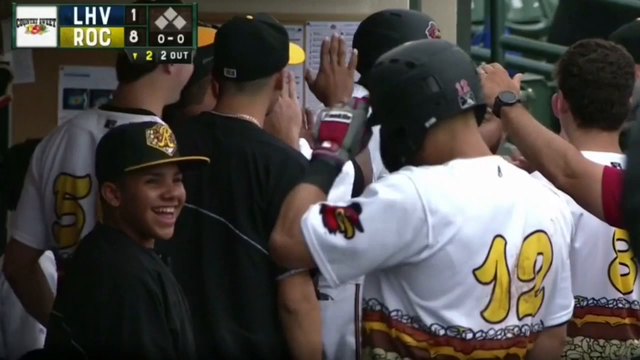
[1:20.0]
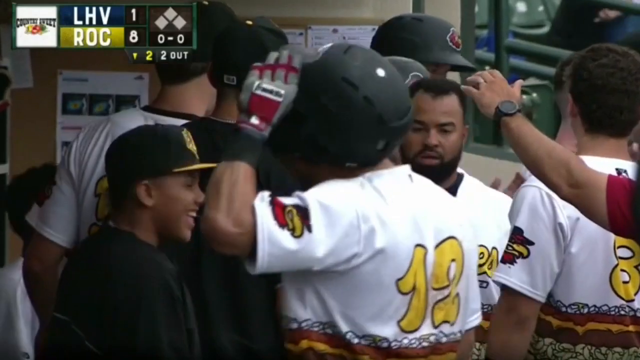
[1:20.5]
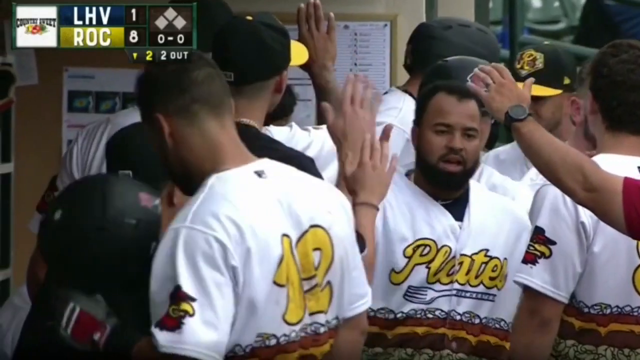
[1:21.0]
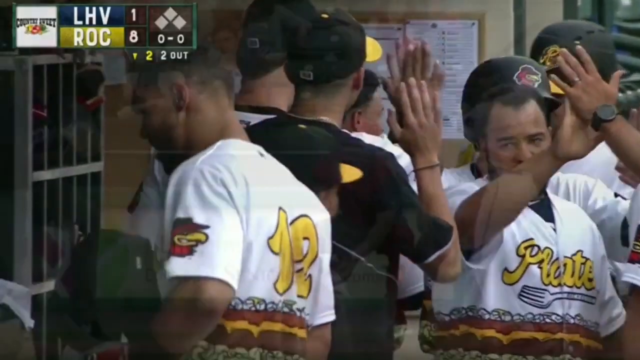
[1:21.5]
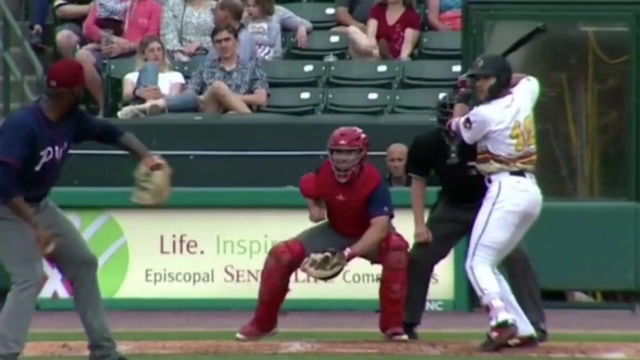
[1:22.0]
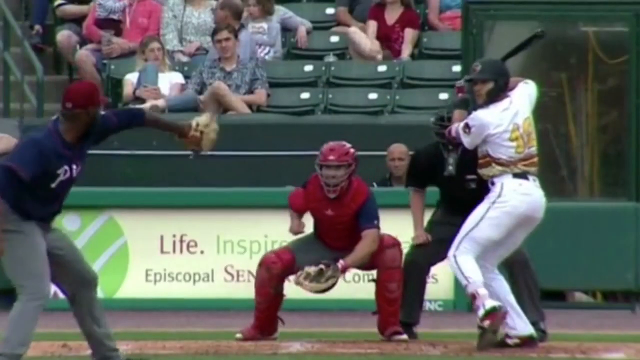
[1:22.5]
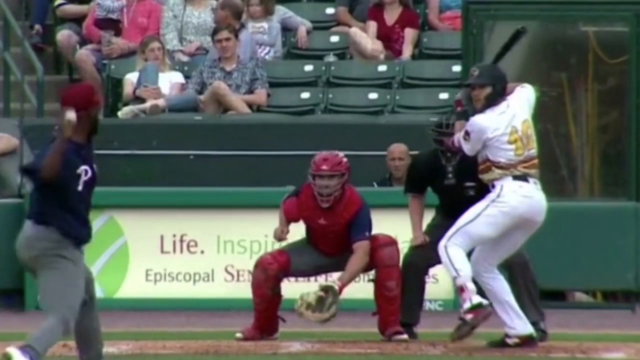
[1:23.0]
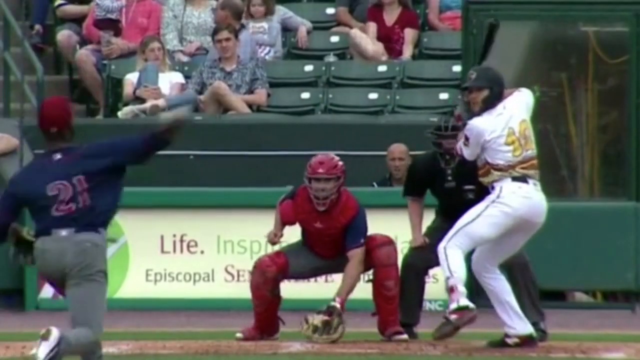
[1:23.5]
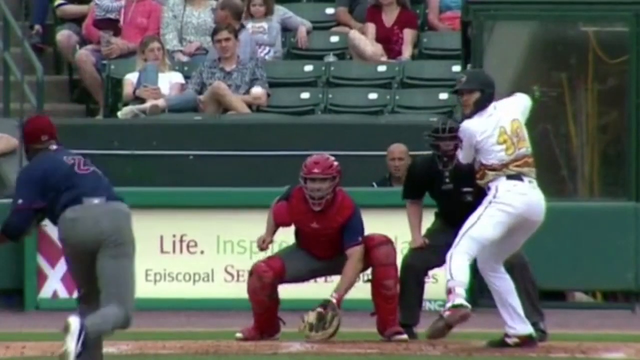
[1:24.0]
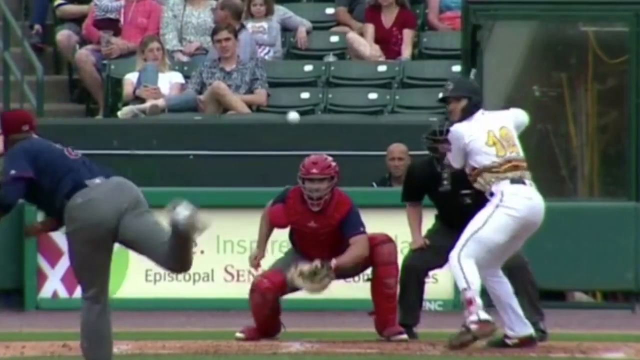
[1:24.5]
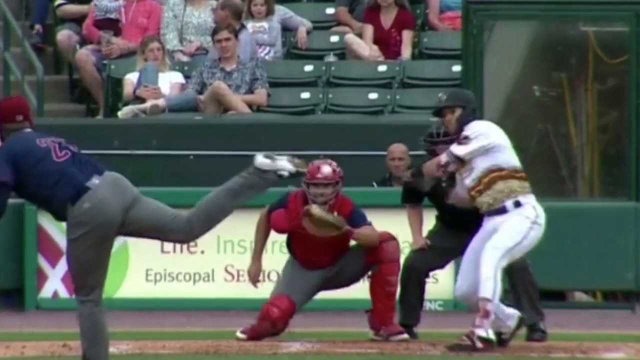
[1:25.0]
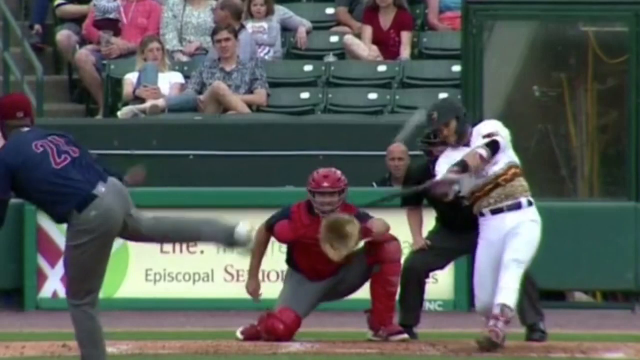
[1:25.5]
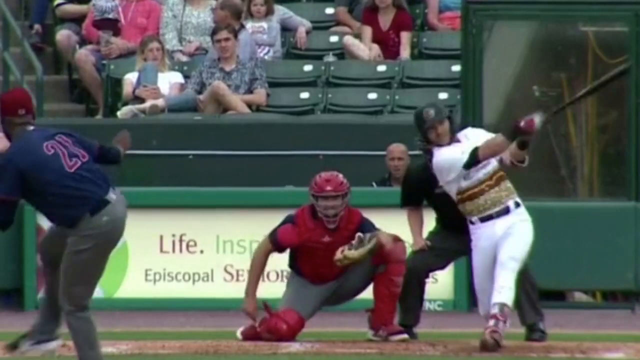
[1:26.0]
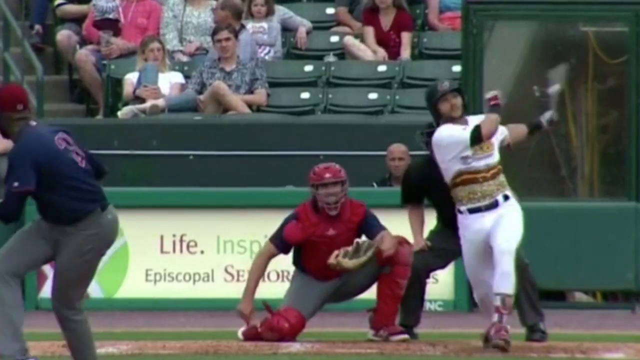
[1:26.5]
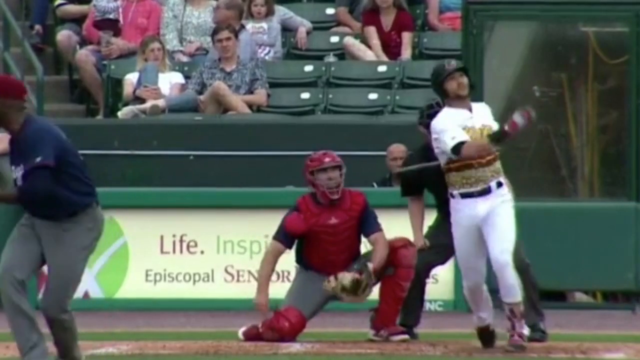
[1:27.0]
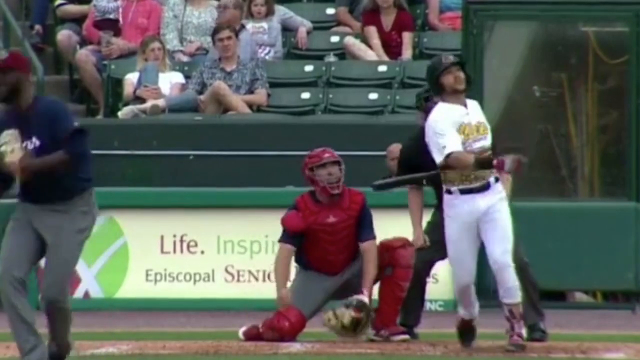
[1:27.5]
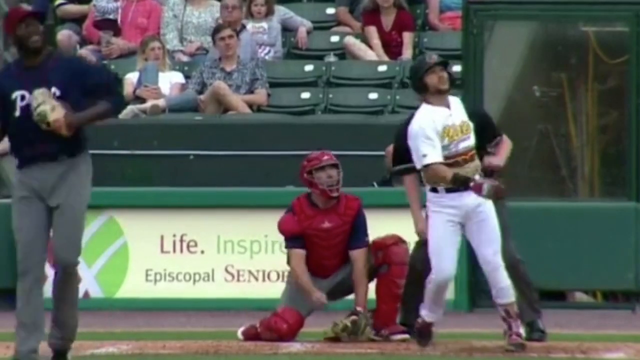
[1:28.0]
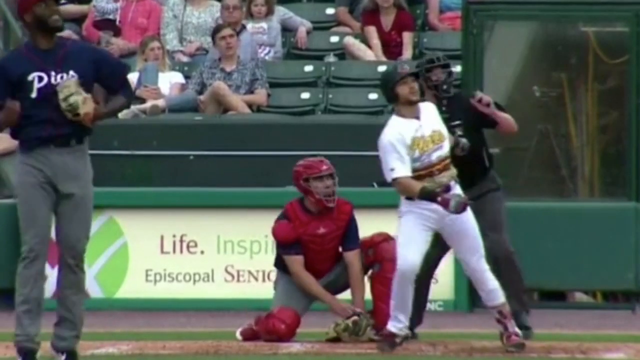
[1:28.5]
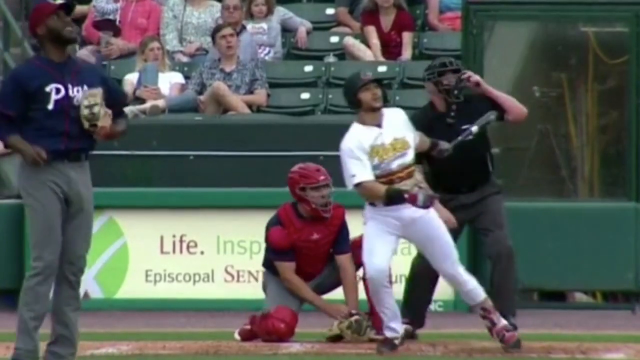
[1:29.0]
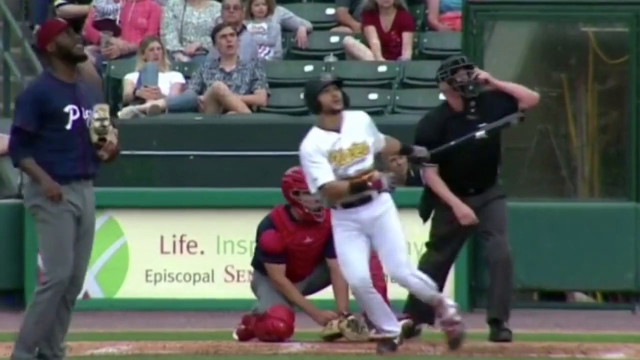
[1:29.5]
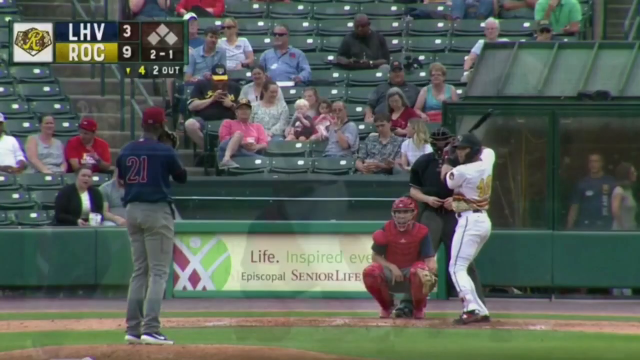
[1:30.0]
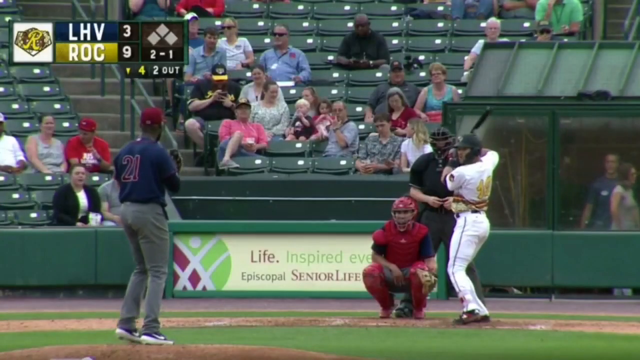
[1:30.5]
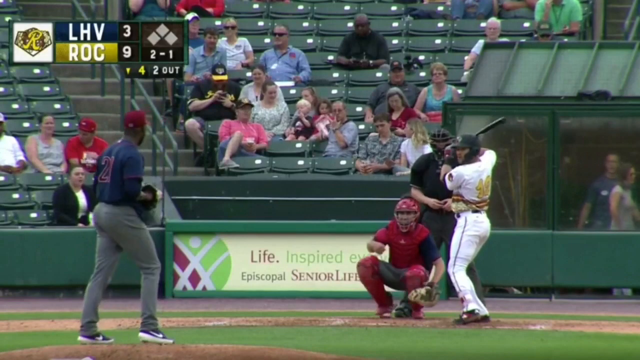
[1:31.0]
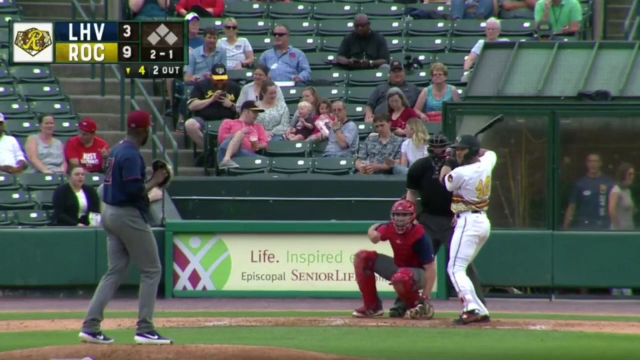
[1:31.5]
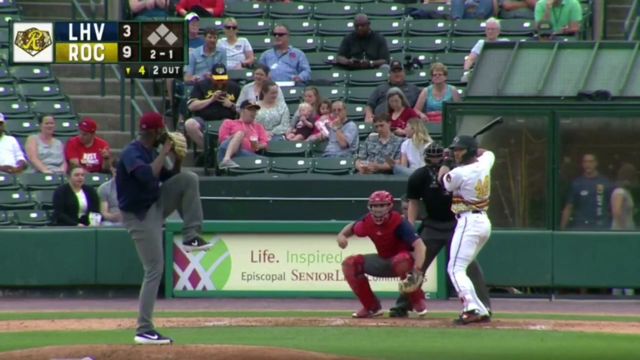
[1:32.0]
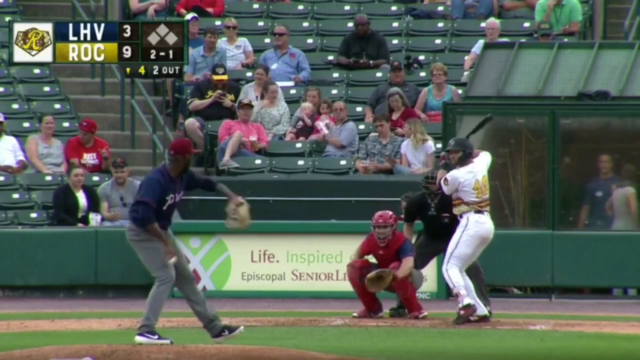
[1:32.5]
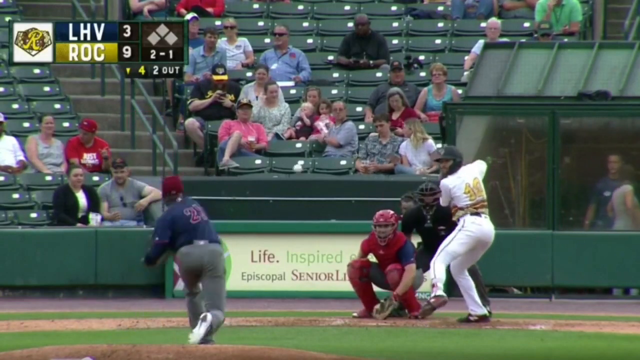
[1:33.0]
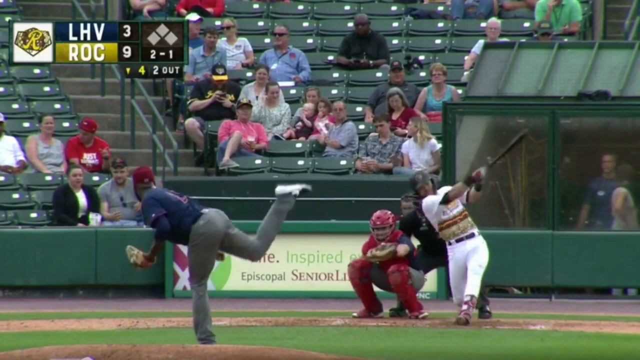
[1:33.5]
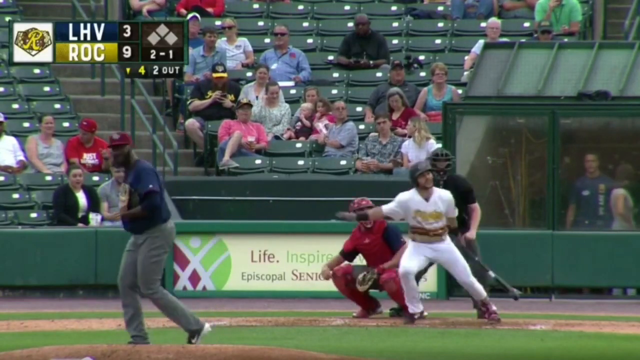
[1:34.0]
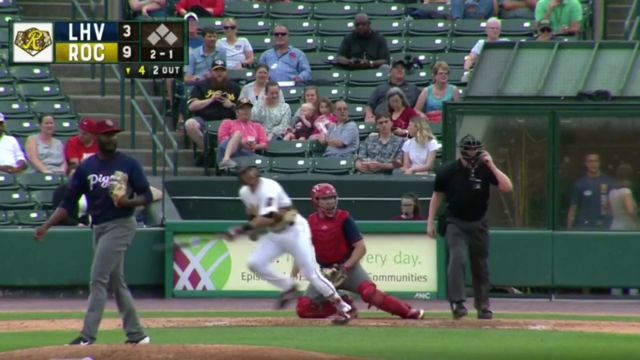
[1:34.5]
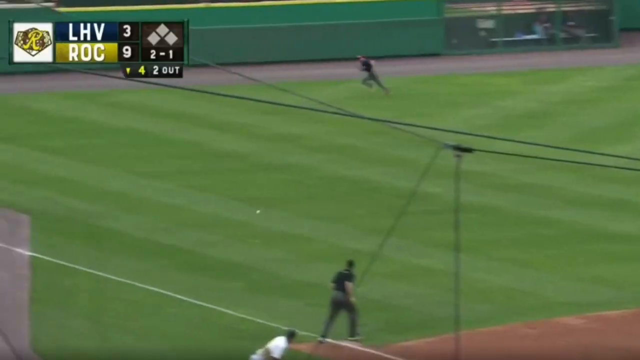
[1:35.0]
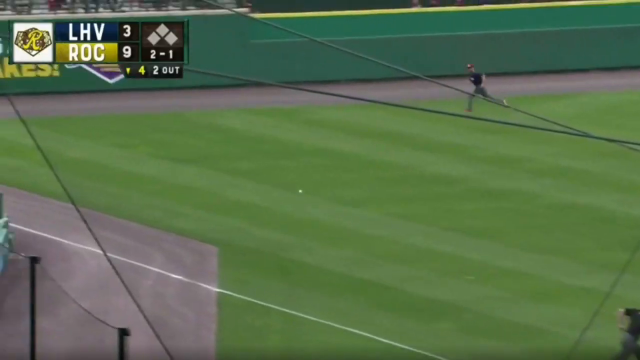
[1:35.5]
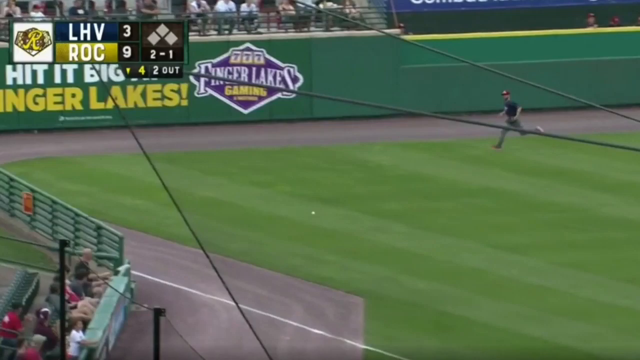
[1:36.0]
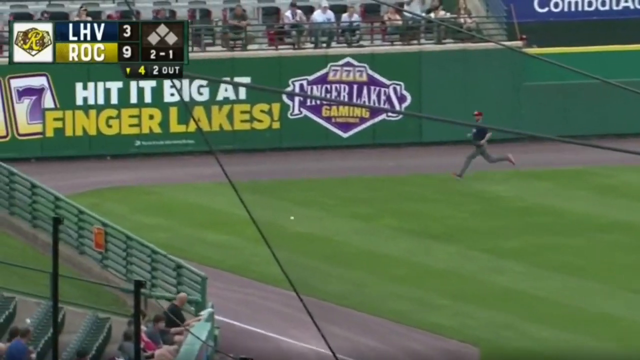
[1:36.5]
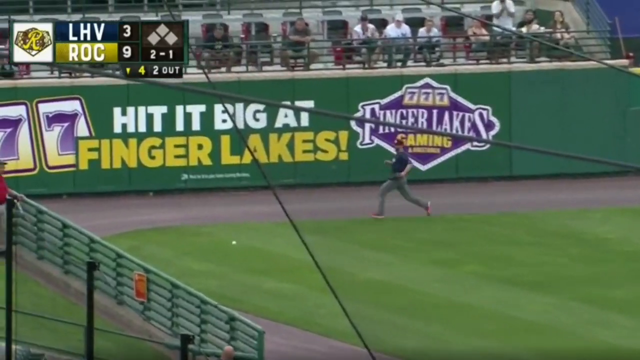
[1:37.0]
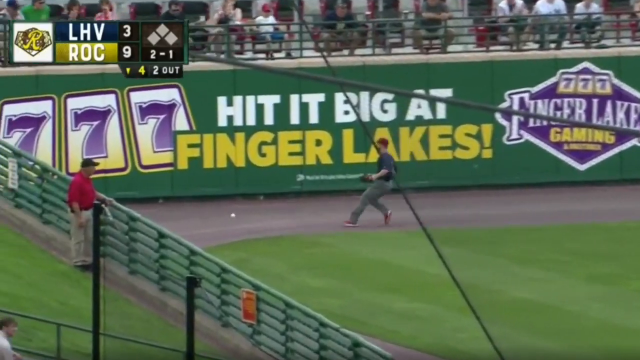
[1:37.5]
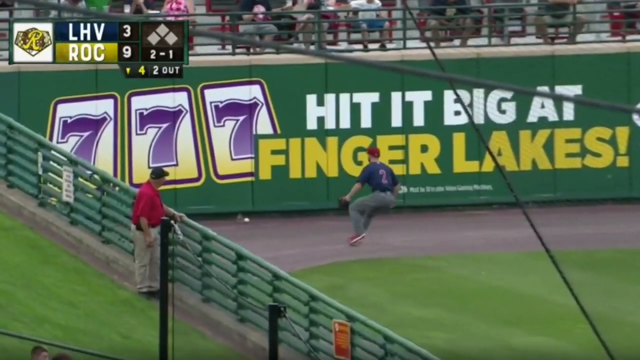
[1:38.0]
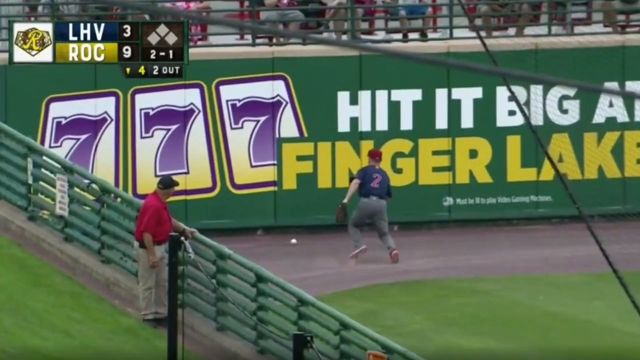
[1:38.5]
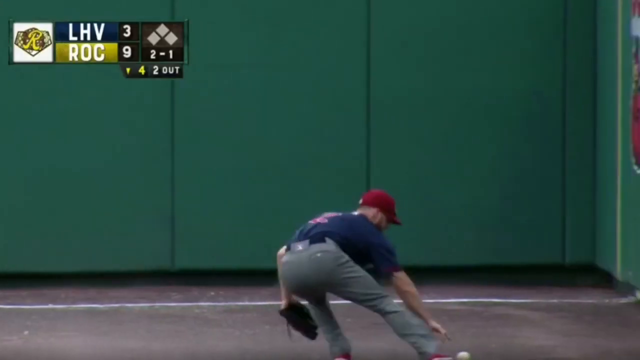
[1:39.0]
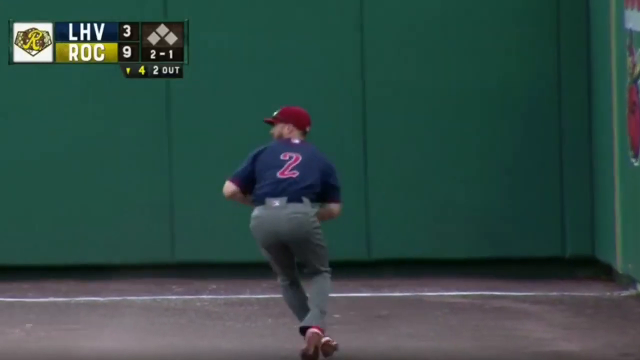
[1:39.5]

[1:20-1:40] A pitcher throws the ball to a batter, who hits it out of the park. Seated spectators fill the audience, with green chairs in the background, and the people watching are excited. The scoreboard shows ROC leading LHV 8 to 1. Players clap for each other.